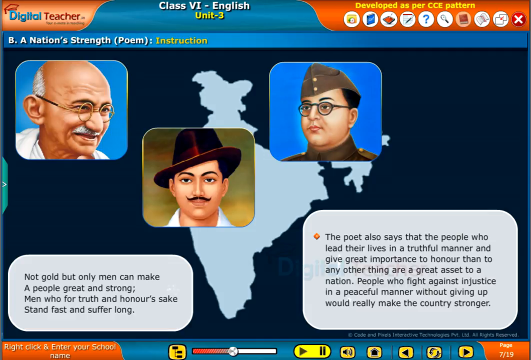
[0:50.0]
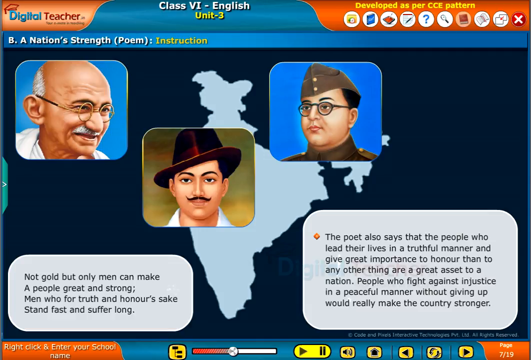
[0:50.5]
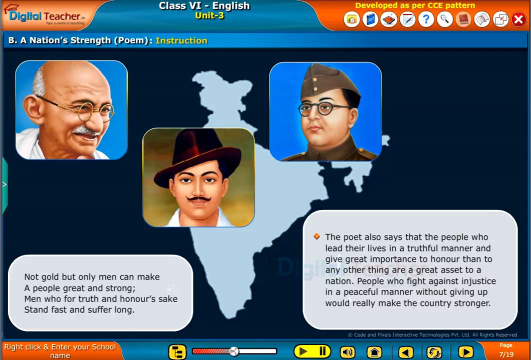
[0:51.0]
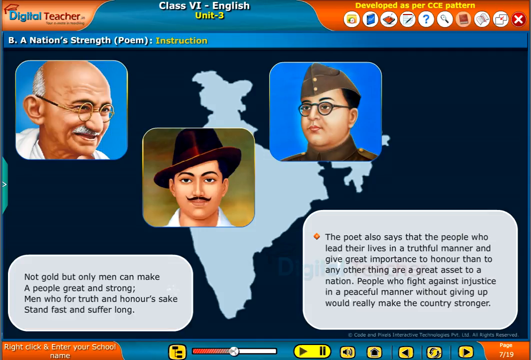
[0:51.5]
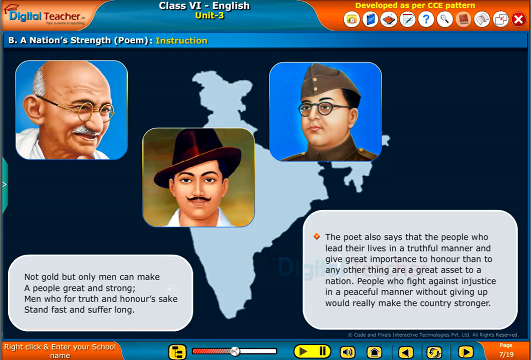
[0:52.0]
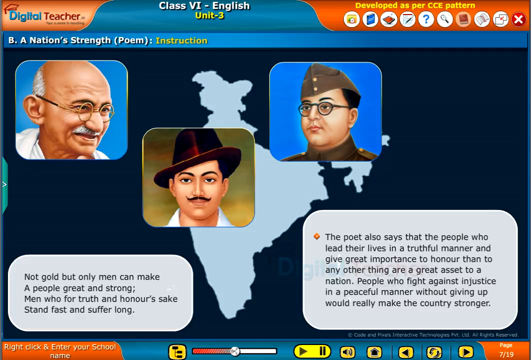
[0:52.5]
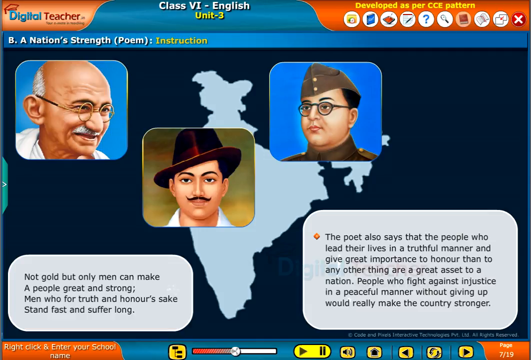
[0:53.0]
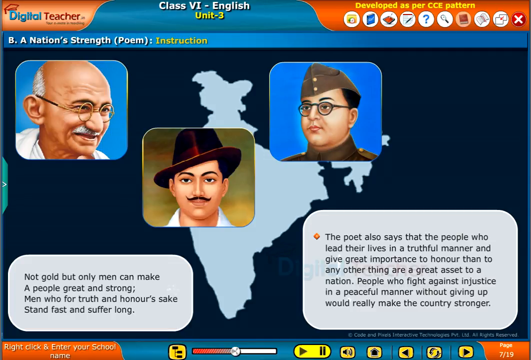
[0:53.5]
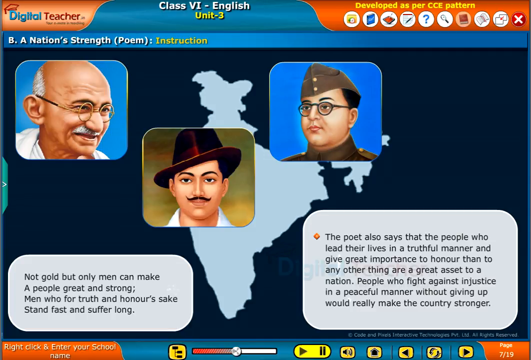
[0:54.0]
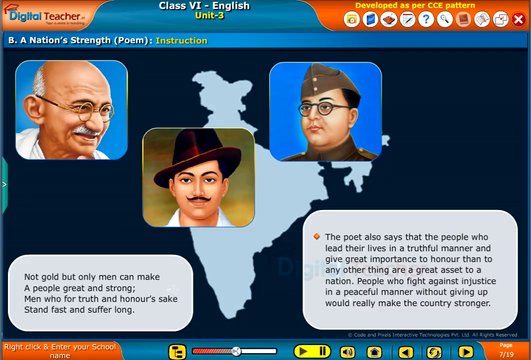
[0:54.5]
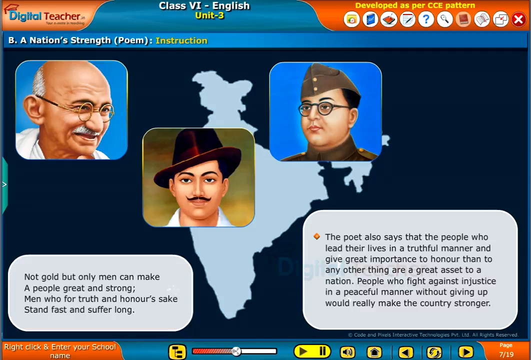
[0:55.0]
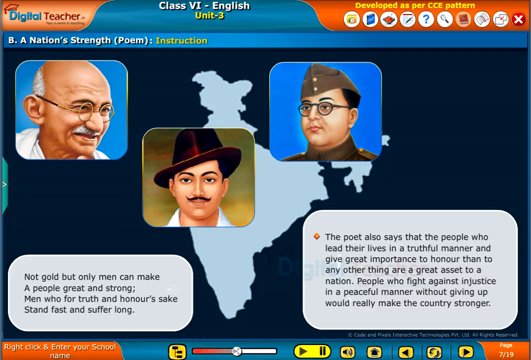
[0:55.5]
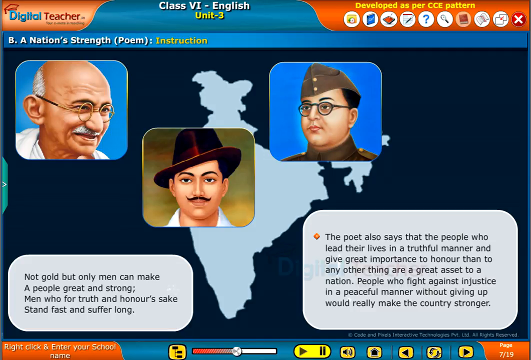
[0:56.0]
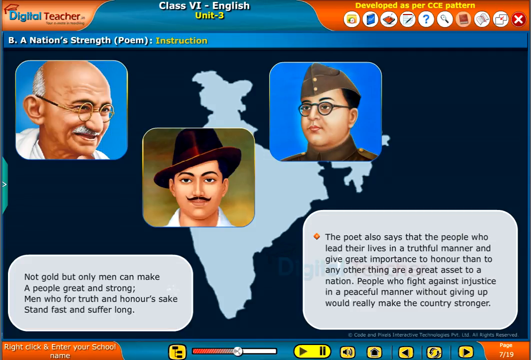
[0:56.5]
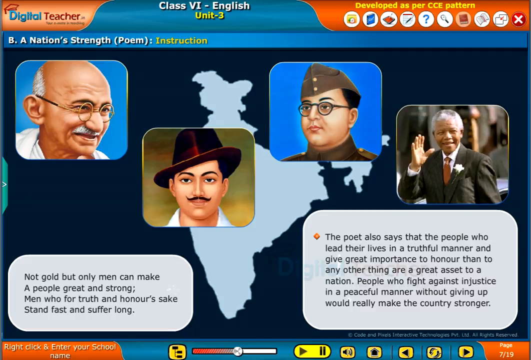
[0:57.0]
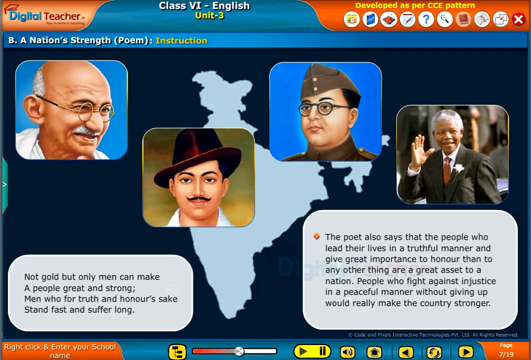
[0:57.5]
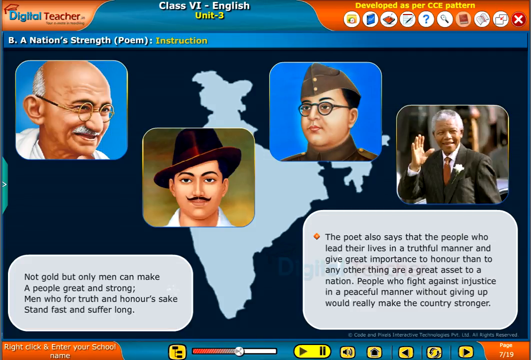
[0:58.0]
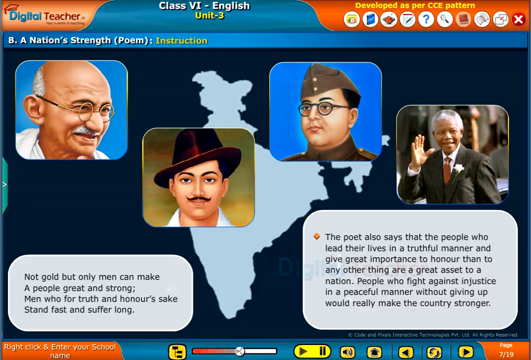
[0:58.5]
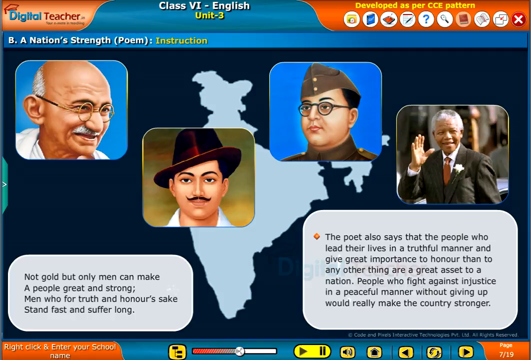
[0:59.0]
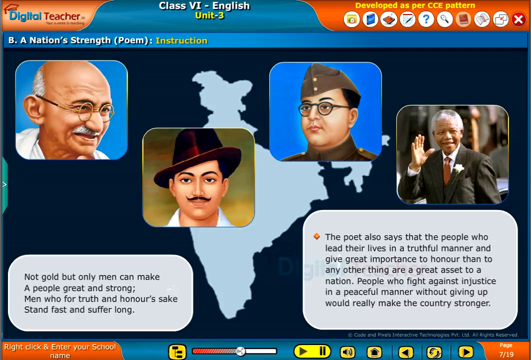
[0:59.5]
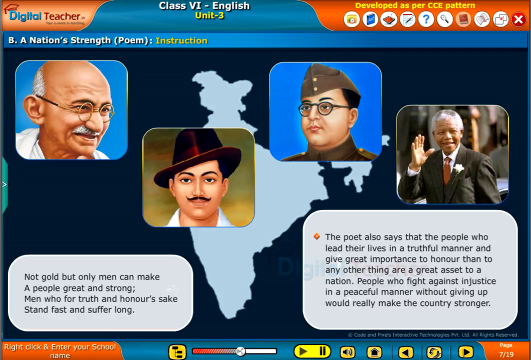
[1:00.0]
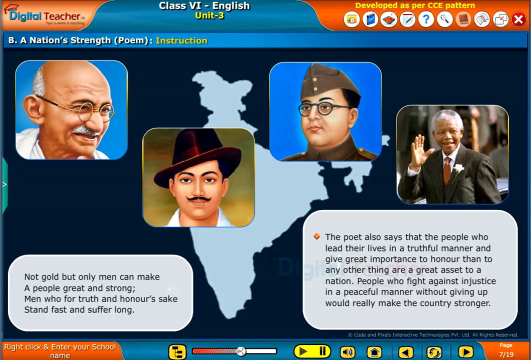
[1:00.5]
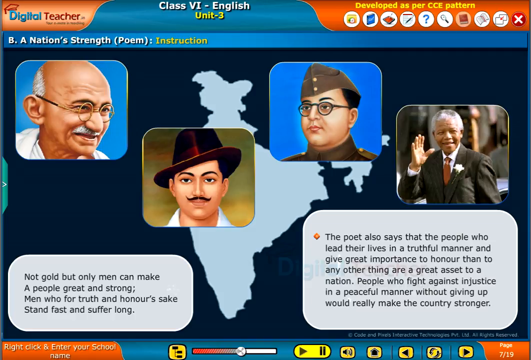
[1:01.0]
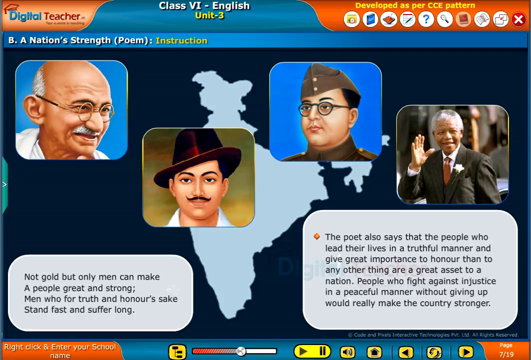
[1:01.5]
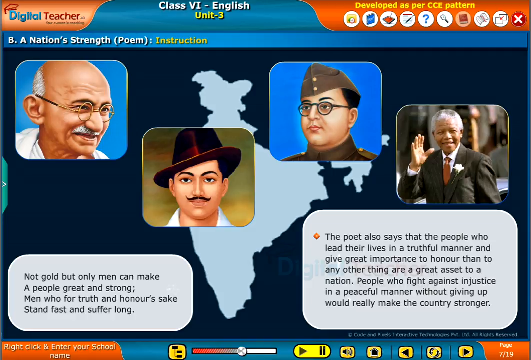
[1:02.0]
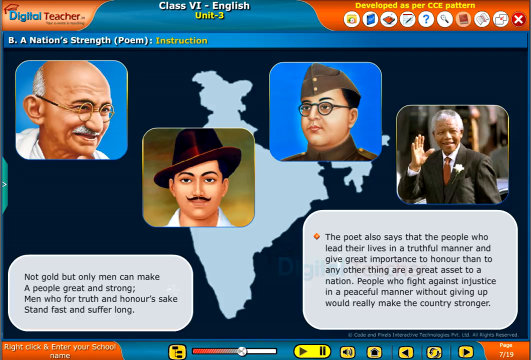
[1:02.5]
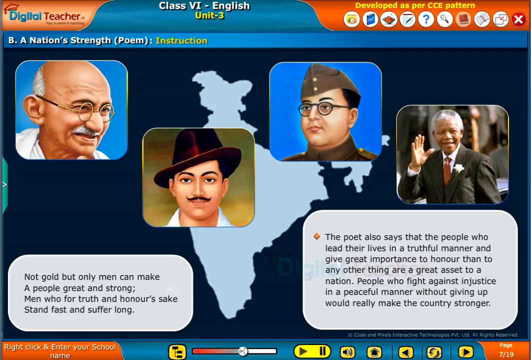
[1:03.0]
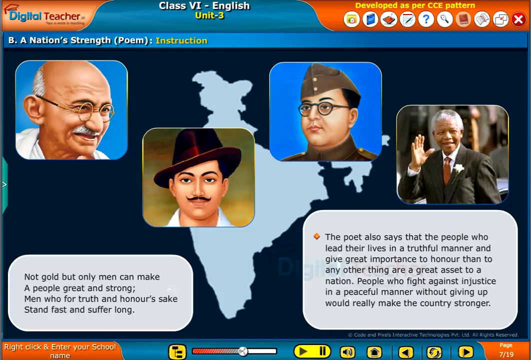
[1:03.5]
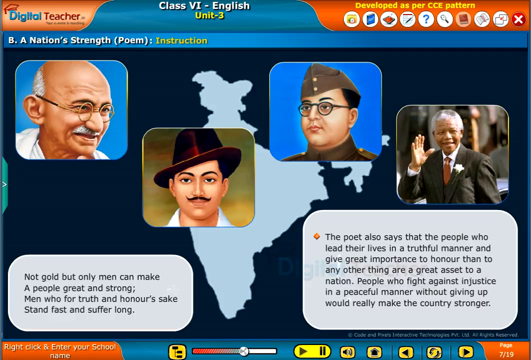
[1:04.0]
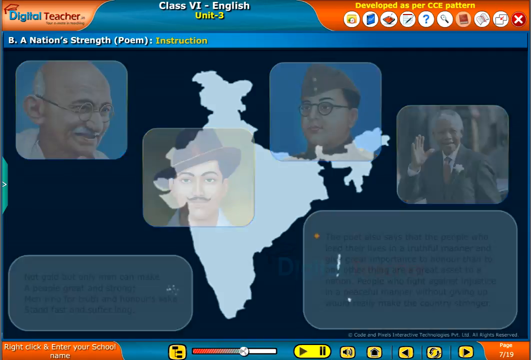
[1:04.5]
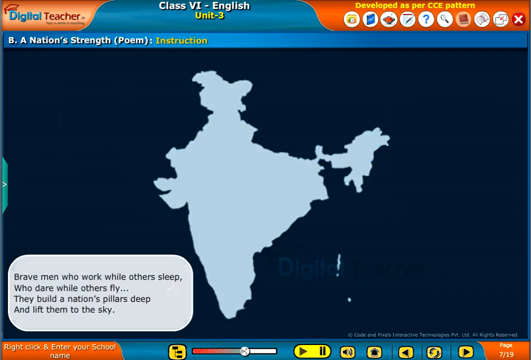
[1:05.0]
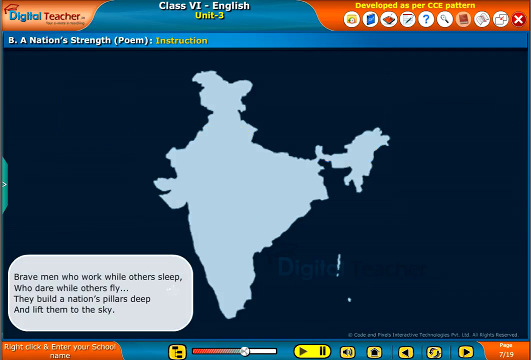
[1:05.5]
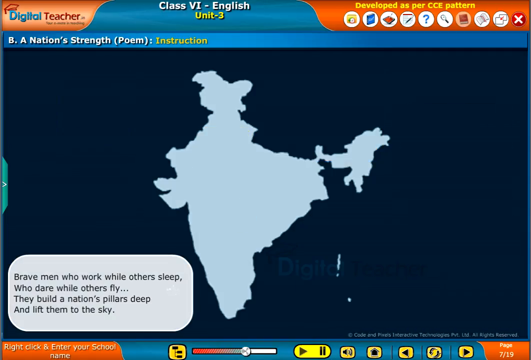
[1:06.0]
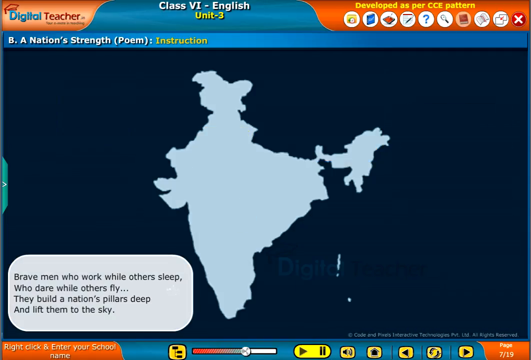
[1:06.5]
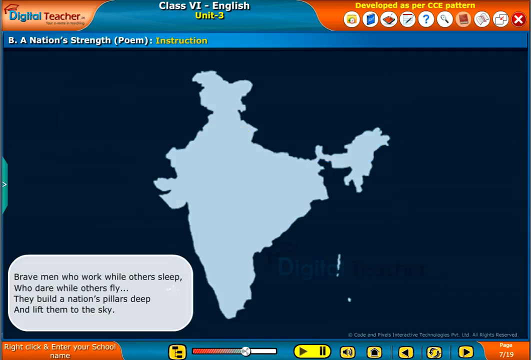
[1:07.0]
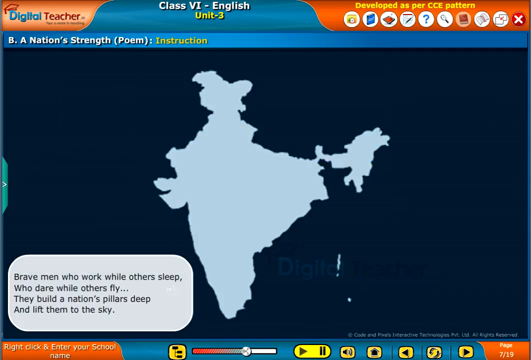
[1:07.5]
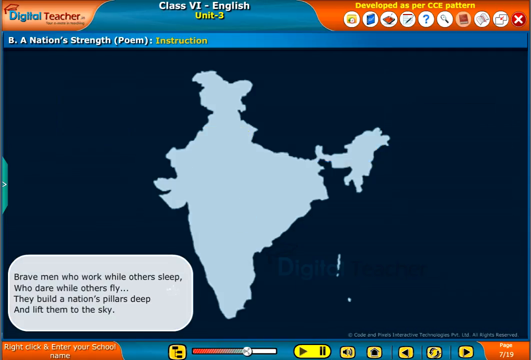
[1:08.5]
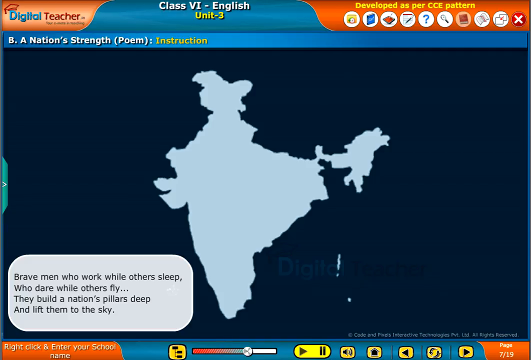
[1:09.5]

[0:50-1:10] An application on a desktop screen shows animated instructions for an English class. The class title, "Class 6, English Unit 3", is written in the middle of the horizontal frame that runs across the top of the screen. The screen is dark, and in the middle of it is a map of India in a pale blue color. Three images run across the top of the map: at the upper left is Mahatma Gandhi, in the middle is a man wearing a fedora with a thin mustache, and to the right is a man wearing a gray beret with a military uniform. The images show only the heads and necks, in square frames with rounded corners. At the lower left and lower right of the screen are text inserts on rectangles with rounded corners; the left one is smaller than the right one. A fourth image then pops up on the right side, above the right text insert: Nelson Mandela, smiling and waving his right hand, wearing a dark suit with a white flower in the lapel of the jacket and a red tie. Only his head and torso are shown.